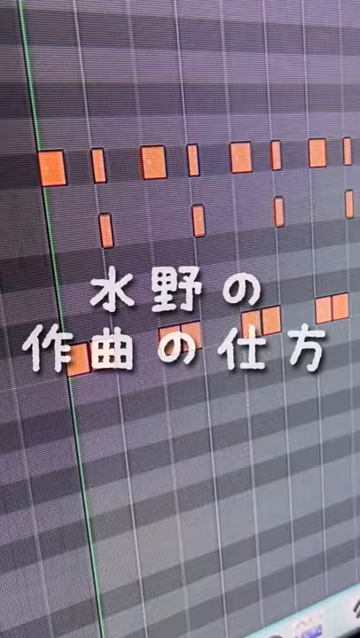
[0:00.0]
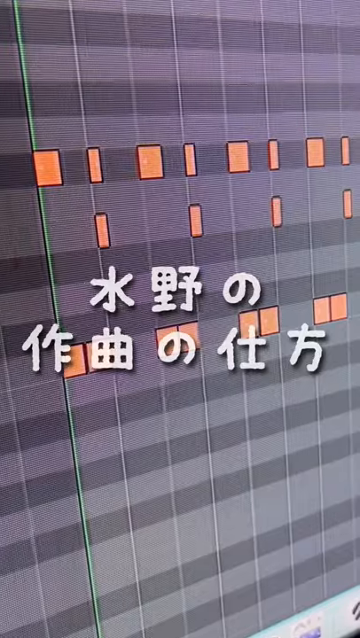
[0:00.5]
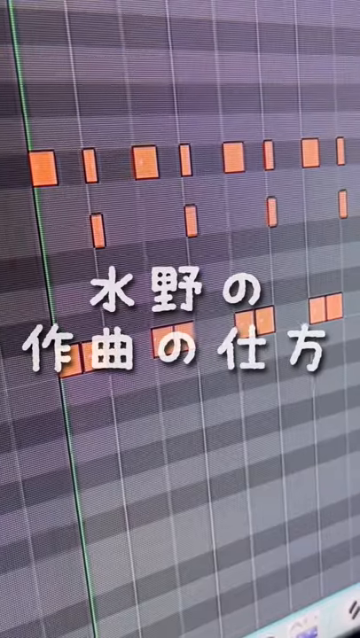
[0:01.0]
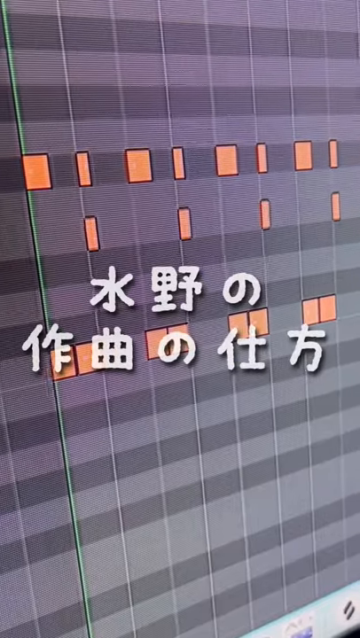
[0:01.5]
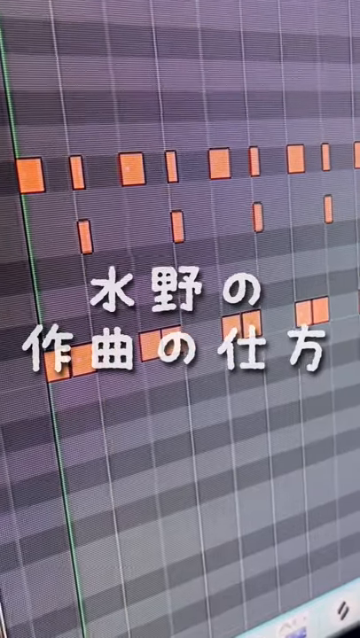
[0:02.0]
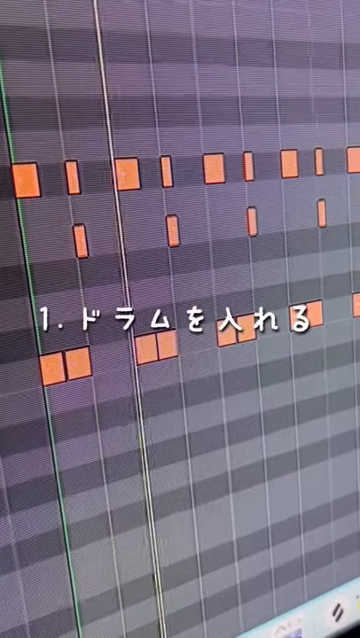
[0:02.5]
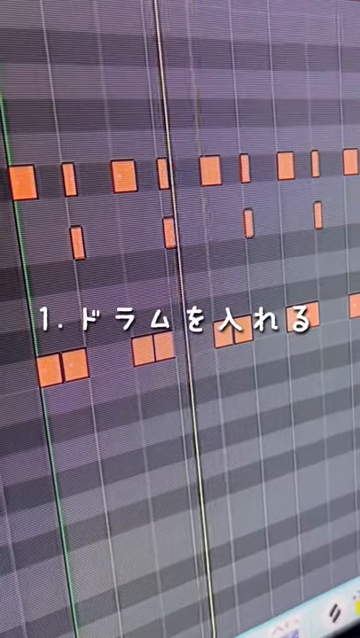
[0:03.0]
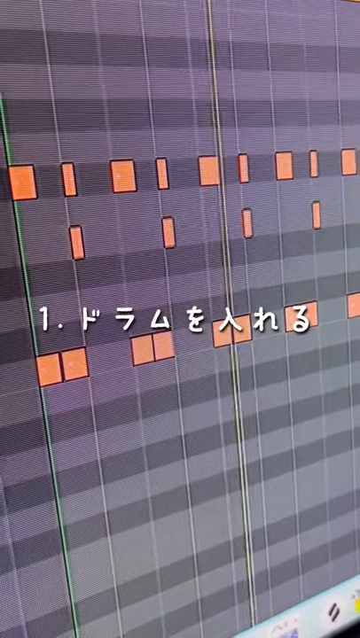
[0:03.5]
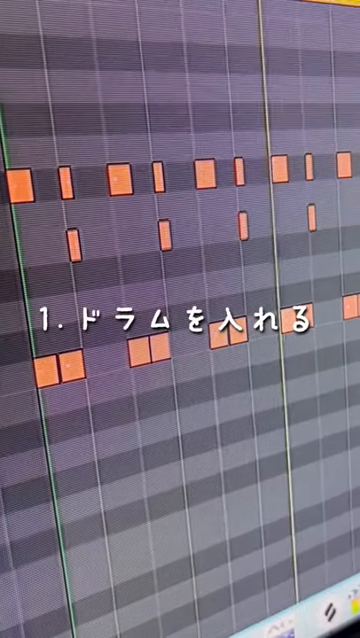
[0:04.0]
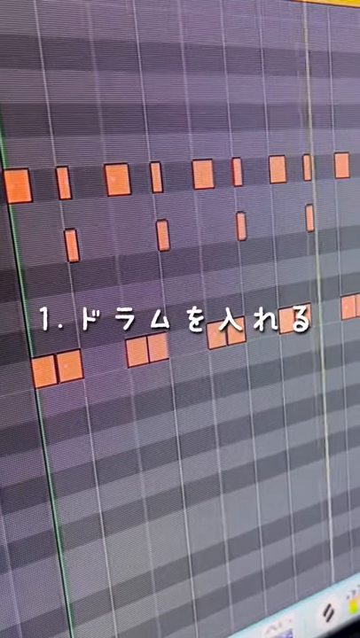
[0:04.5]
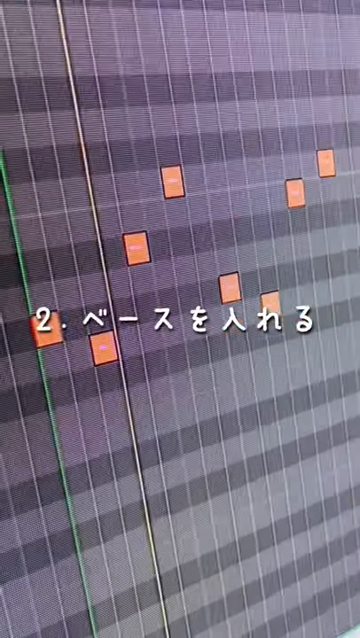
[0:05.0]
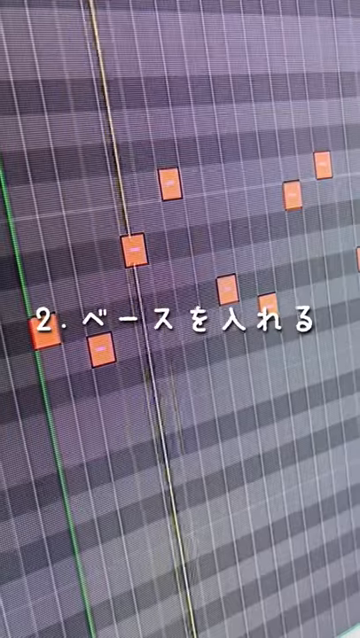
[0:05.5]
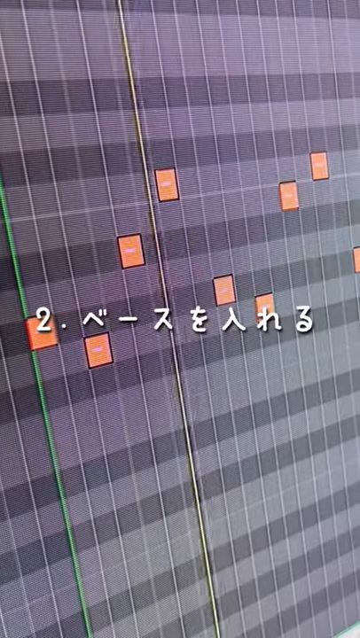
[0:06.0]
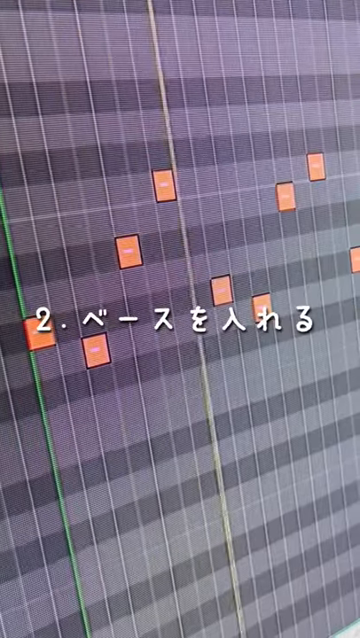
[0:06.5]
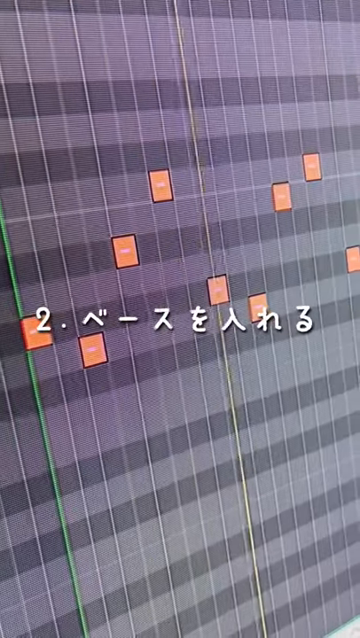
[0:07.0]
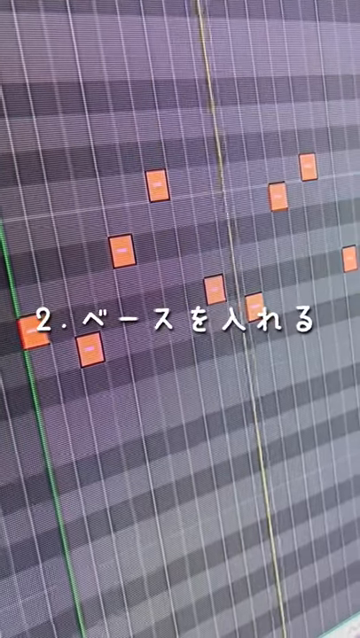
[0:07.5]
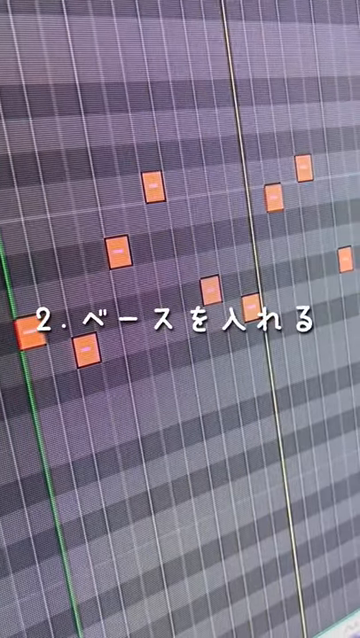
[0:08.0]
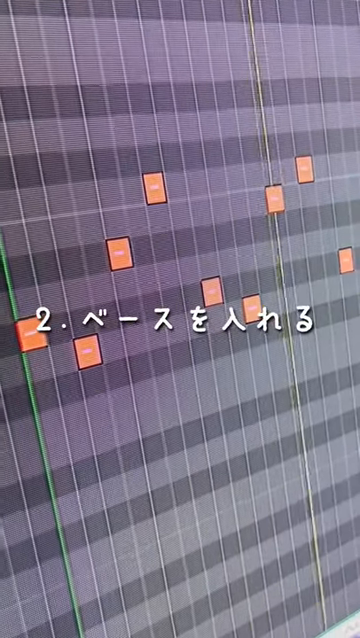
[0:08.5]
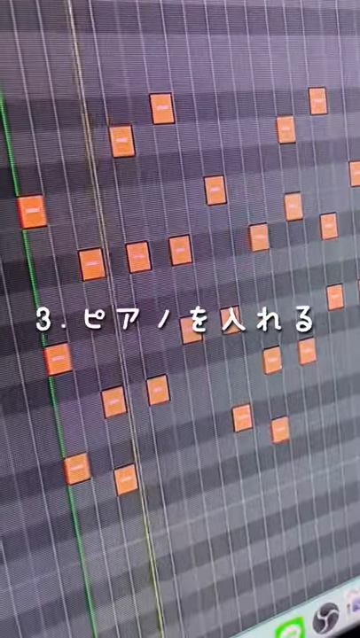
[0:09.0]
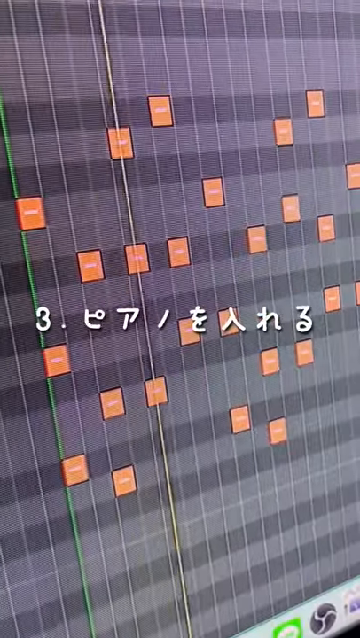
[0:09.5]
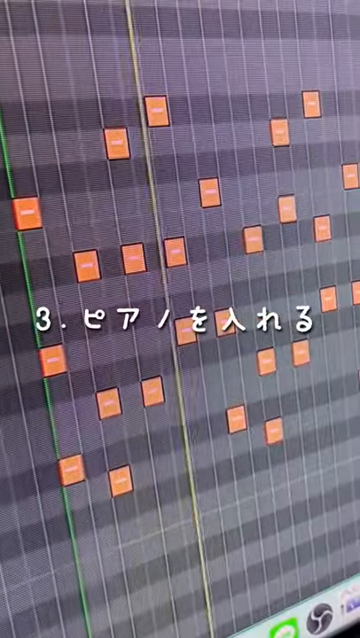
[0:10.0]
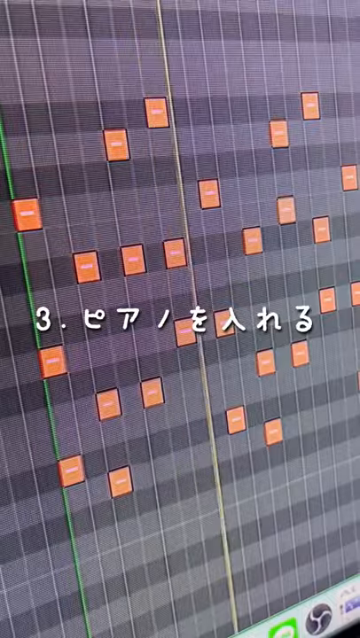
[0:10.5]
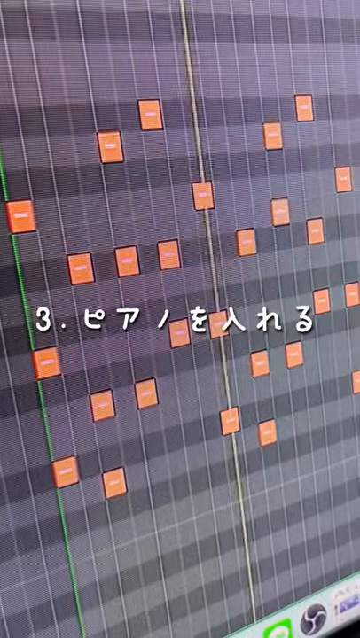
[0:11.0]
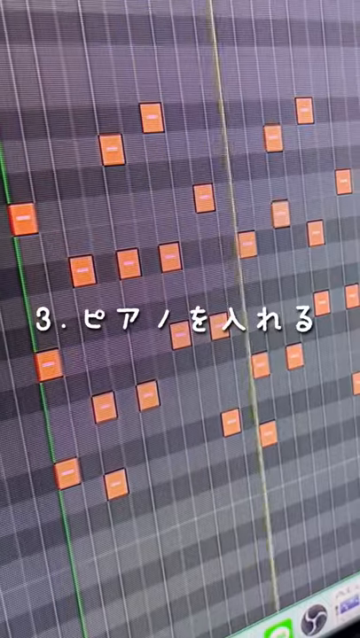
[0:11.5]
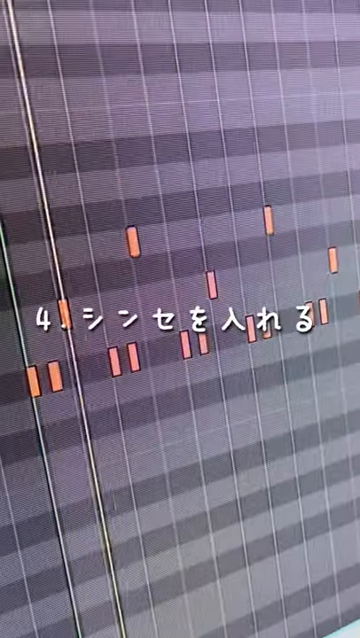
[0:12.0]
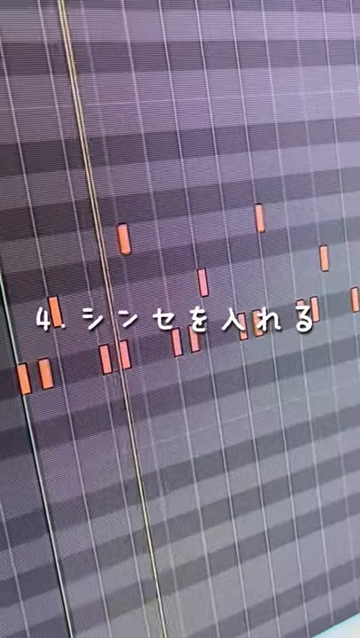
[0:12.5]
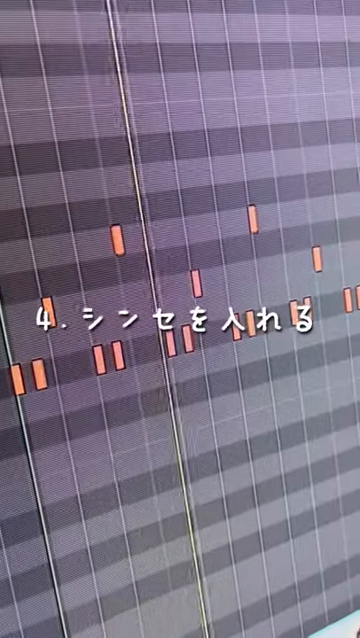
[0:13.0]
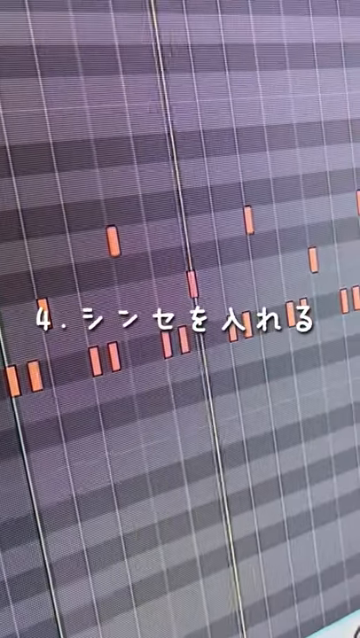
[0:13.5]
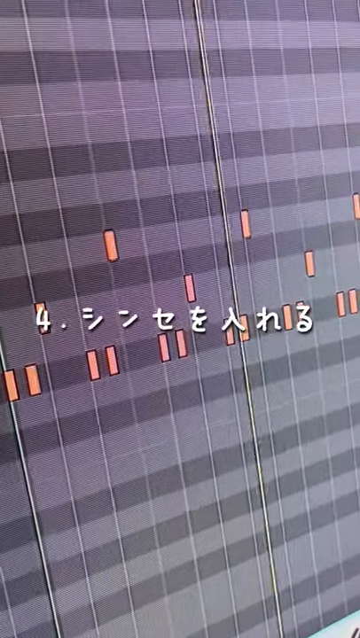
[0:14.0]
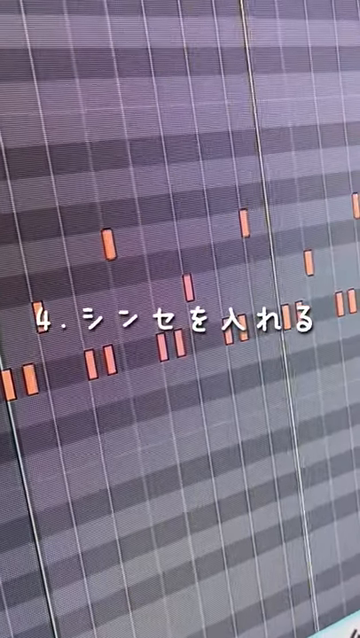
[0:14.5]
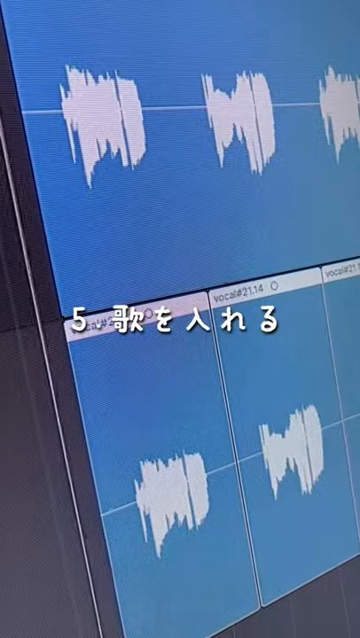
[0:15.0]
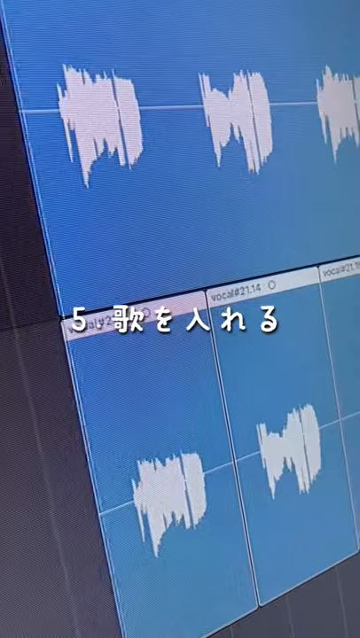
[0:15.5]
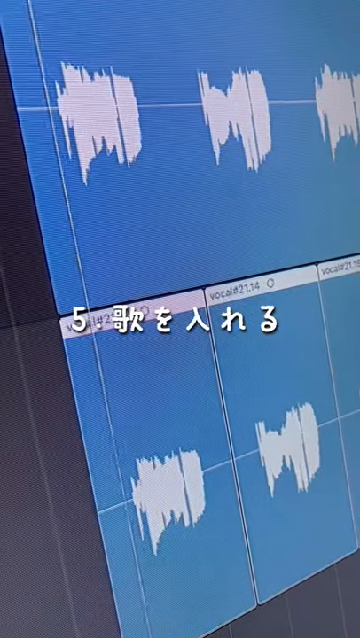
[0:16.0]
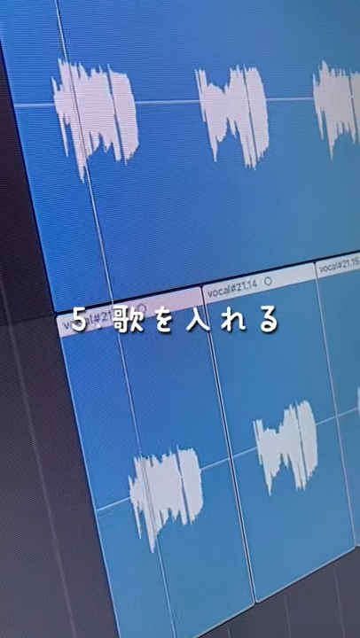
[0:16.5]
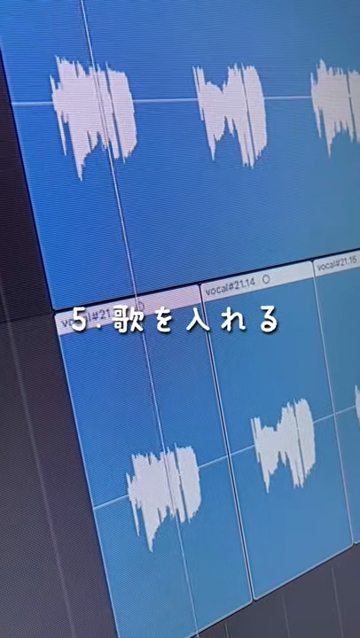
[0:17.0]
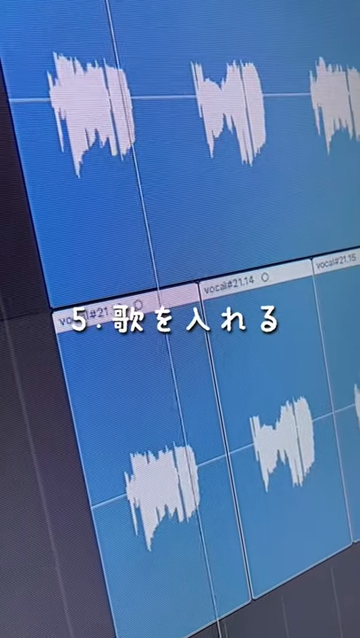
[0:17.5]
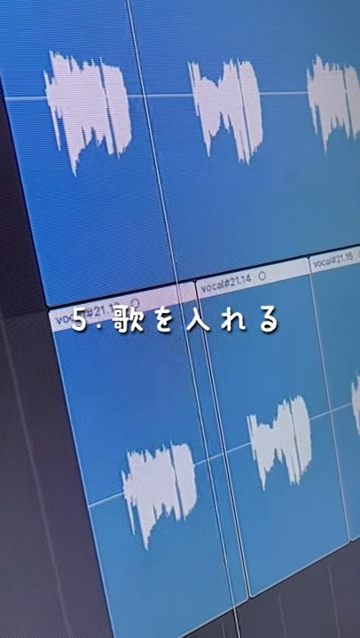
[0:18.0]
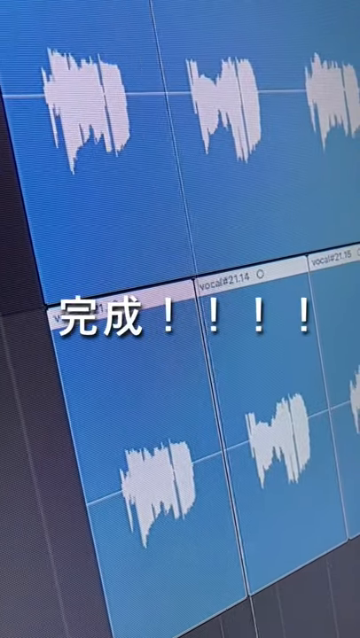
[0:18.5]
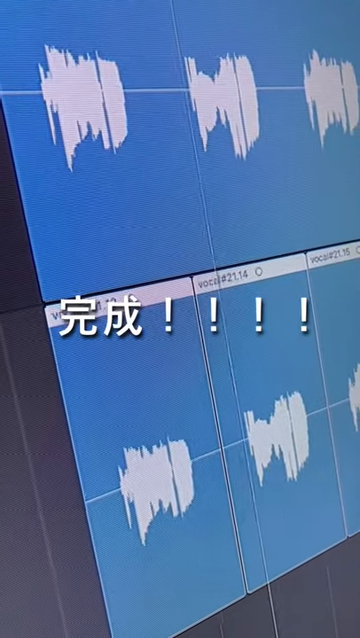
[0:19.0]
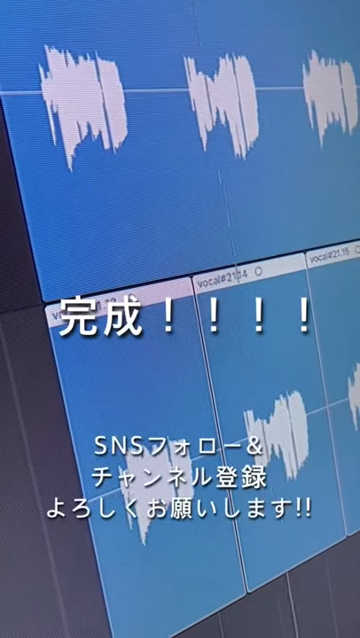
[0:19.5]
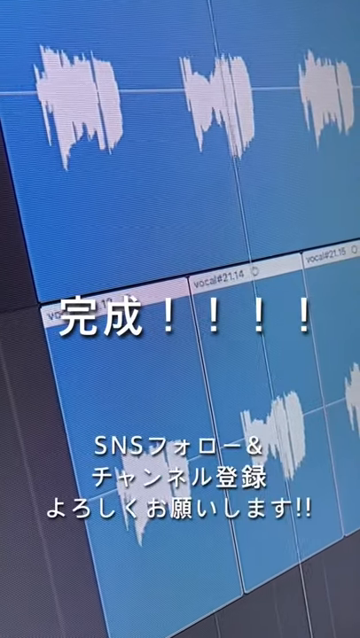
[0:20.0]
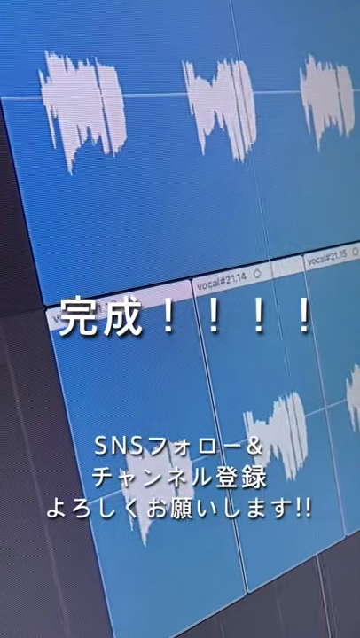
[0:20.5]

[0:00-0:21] What appears to be some sort of audio software is on screen, possibly a video of an audio recording. There is text in what seems to be an Asian language. The display breaks down into little parts that are orange on a black background, with a progress bar moving through them as in an audio software program; these little breaks are everywhere. Near the end, they break into a full-on sound wave: a blue background with white sound waves inside it, fluctuating up and down.